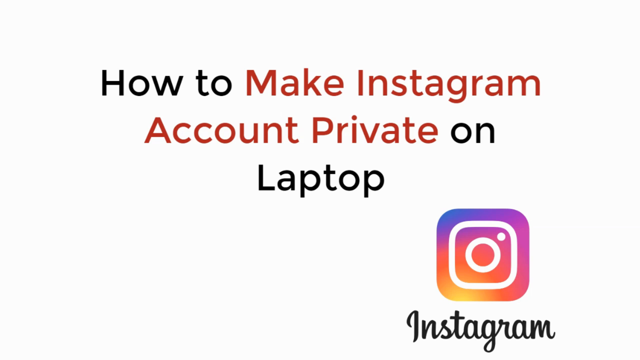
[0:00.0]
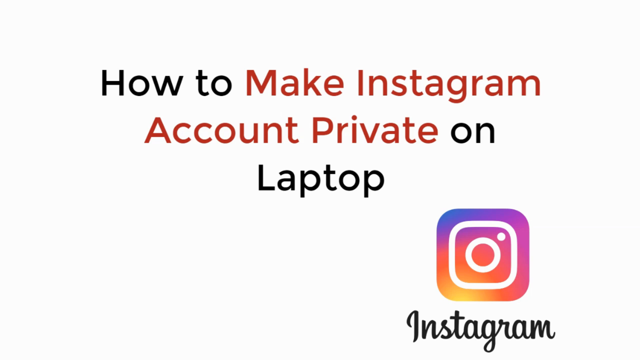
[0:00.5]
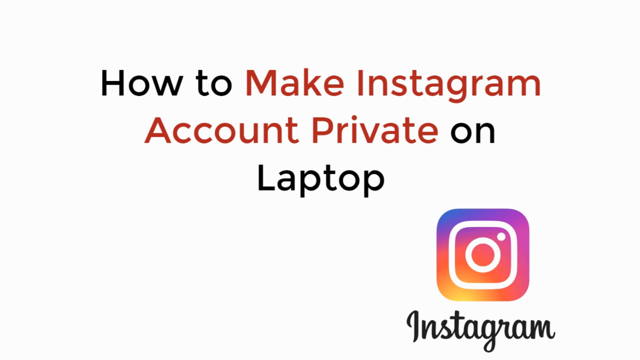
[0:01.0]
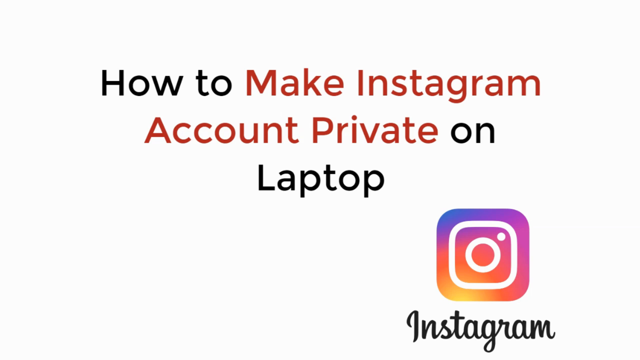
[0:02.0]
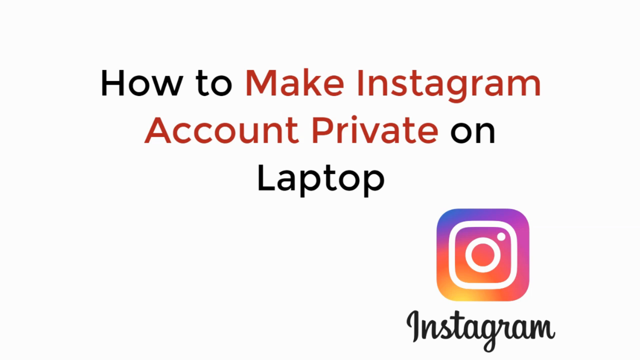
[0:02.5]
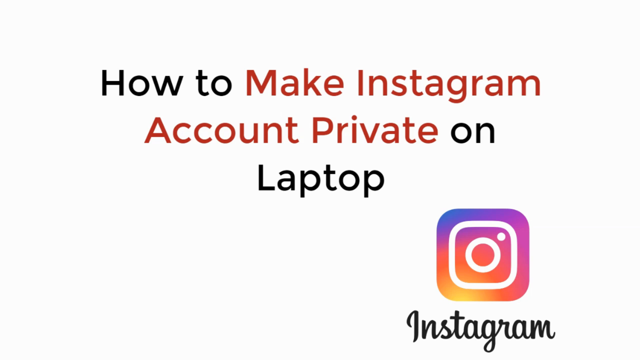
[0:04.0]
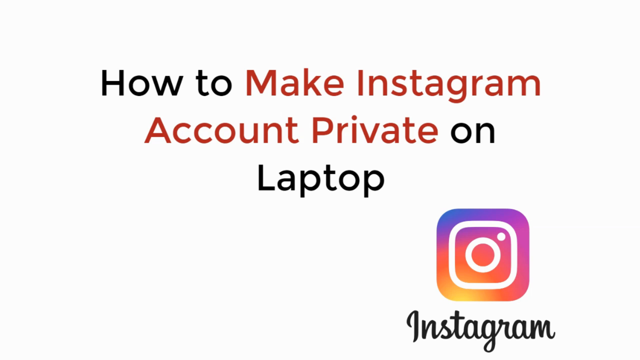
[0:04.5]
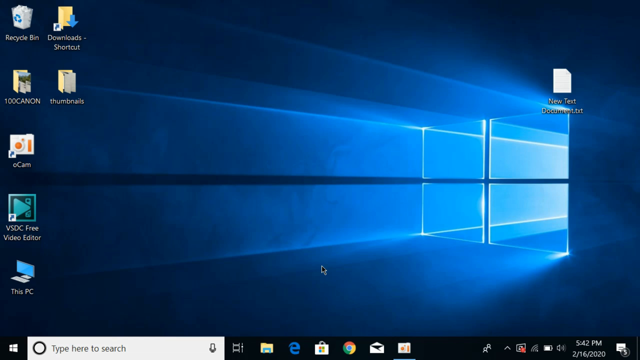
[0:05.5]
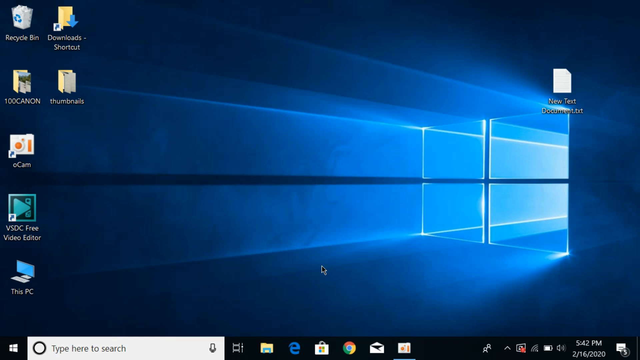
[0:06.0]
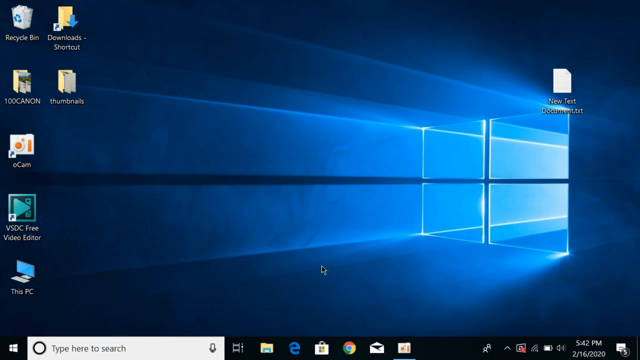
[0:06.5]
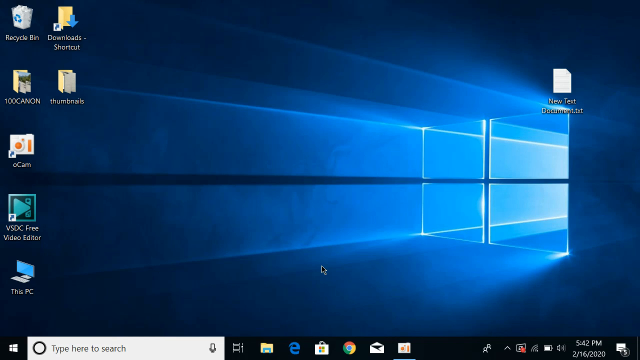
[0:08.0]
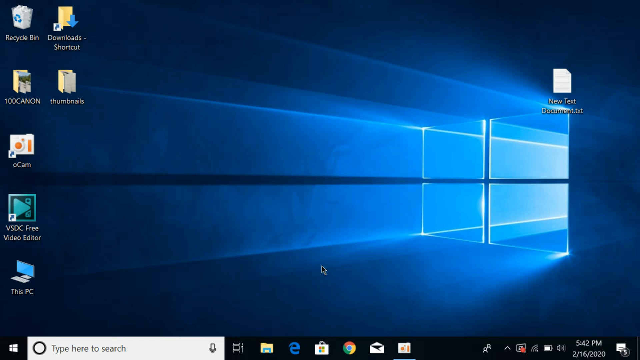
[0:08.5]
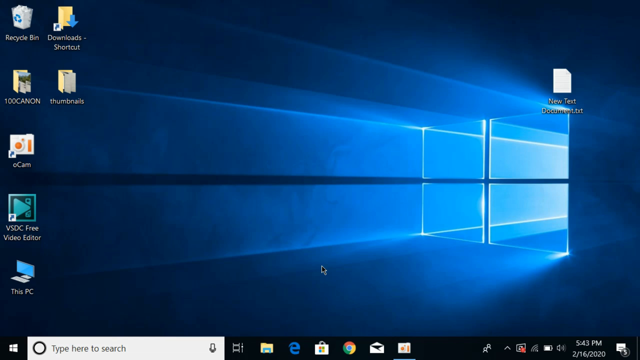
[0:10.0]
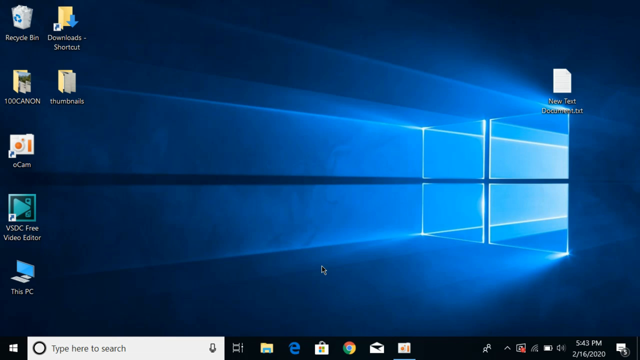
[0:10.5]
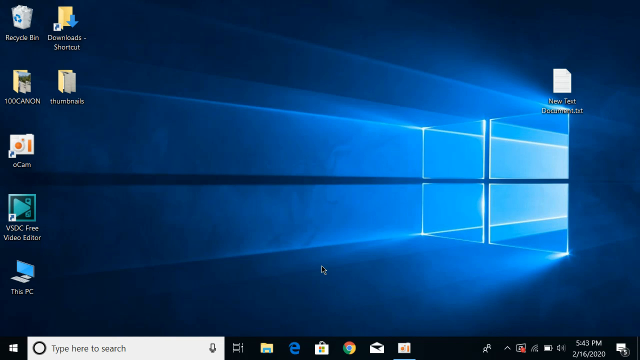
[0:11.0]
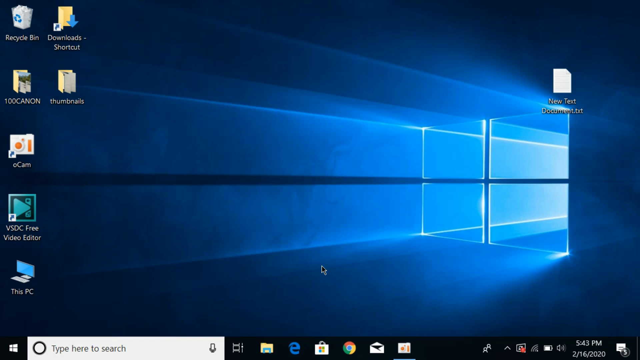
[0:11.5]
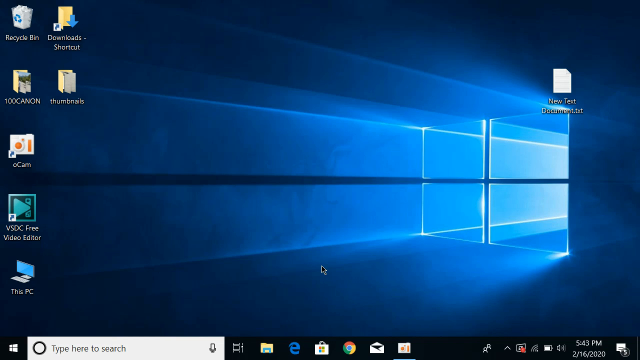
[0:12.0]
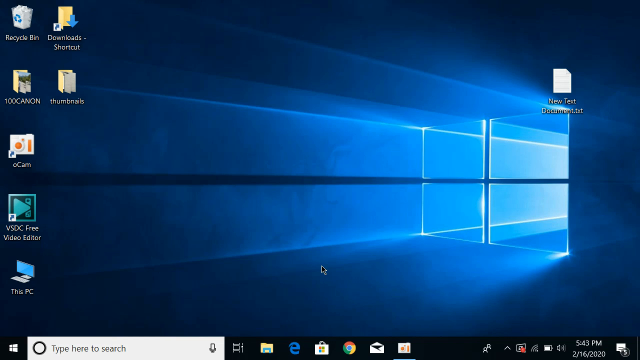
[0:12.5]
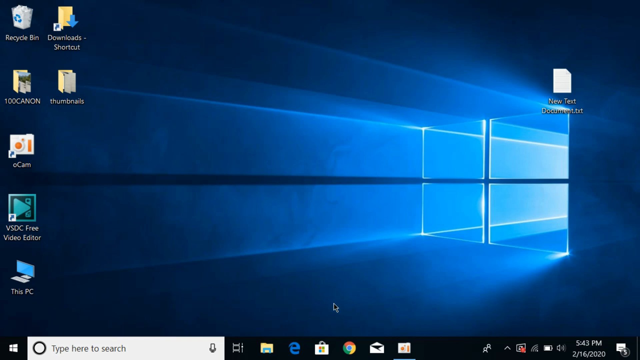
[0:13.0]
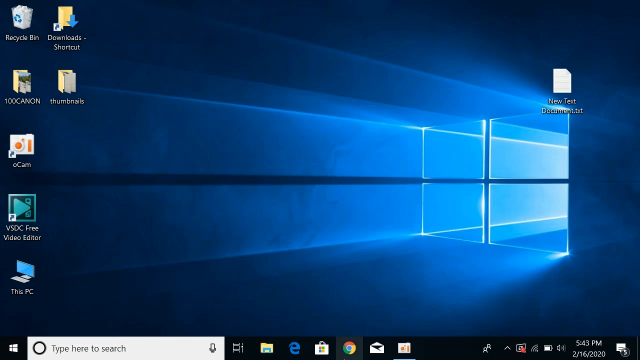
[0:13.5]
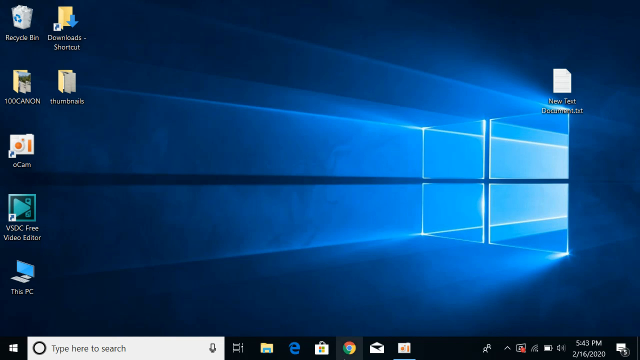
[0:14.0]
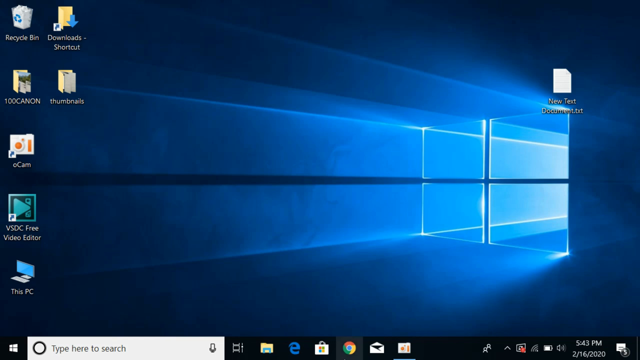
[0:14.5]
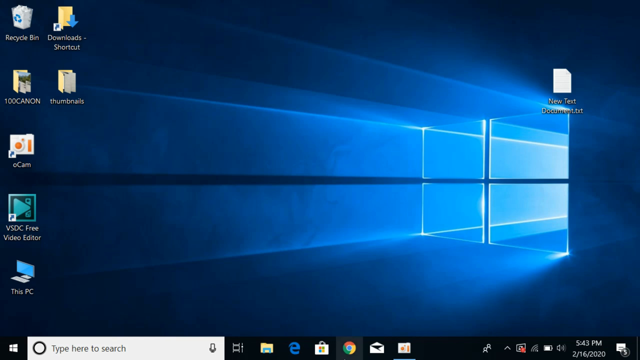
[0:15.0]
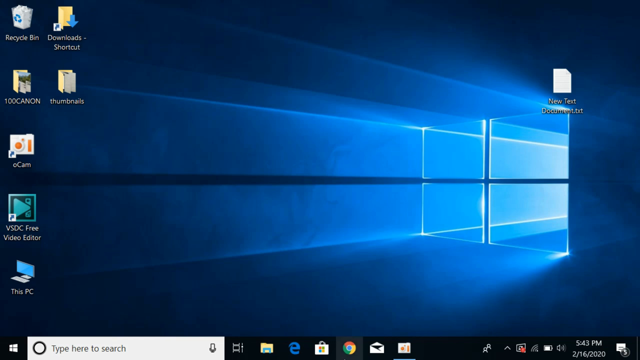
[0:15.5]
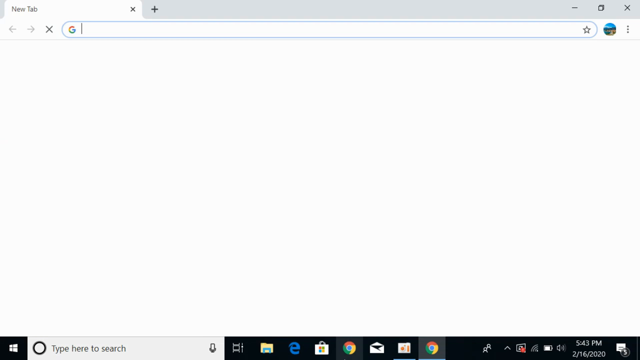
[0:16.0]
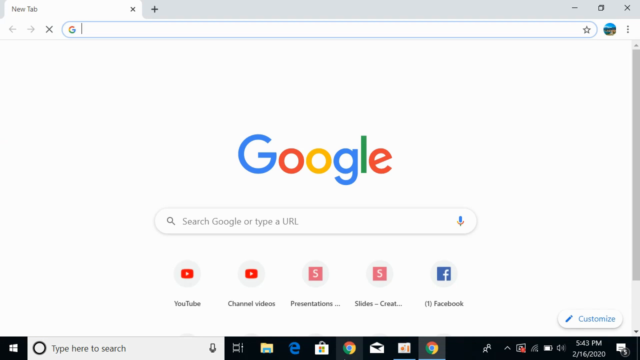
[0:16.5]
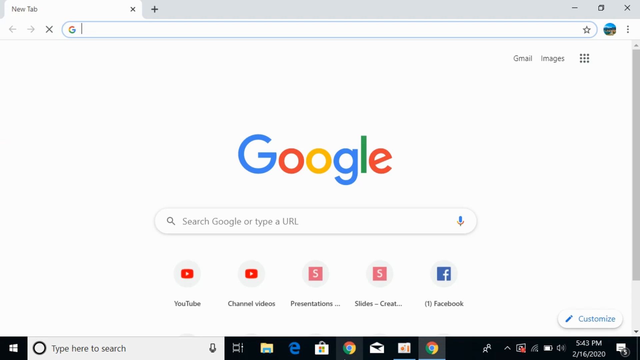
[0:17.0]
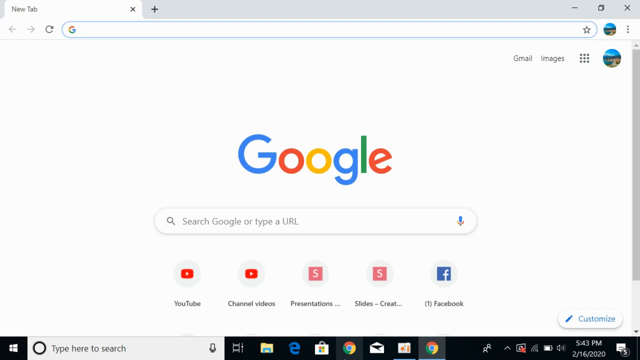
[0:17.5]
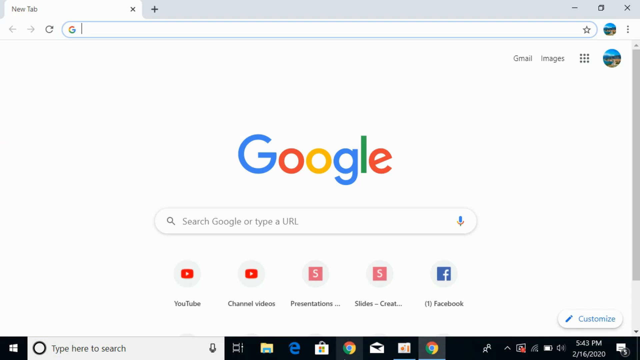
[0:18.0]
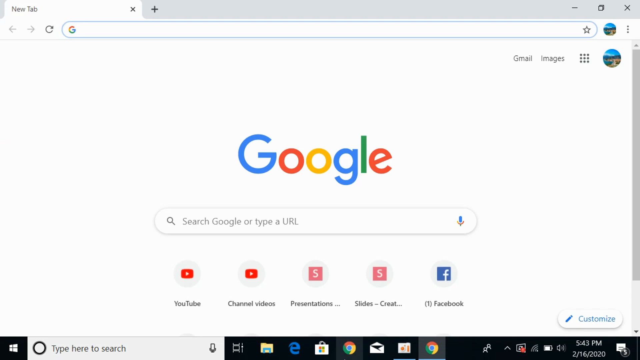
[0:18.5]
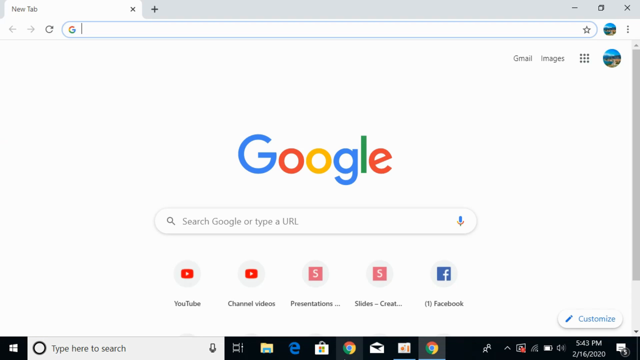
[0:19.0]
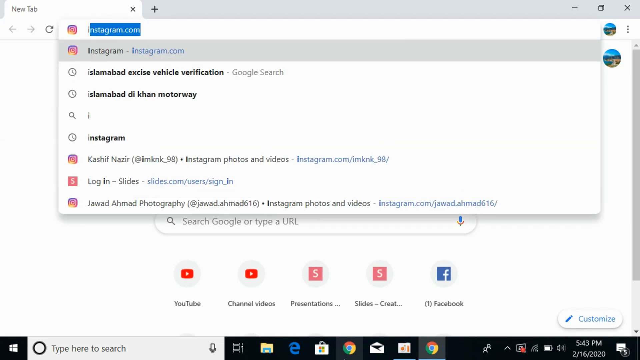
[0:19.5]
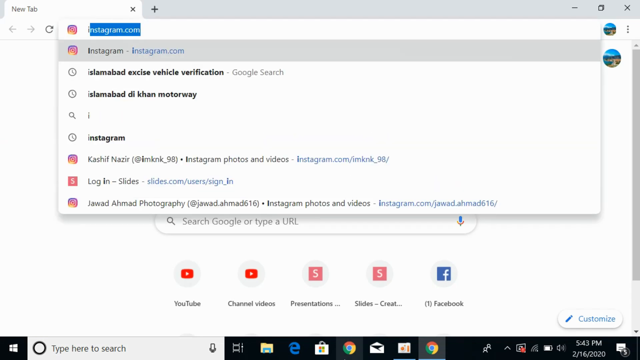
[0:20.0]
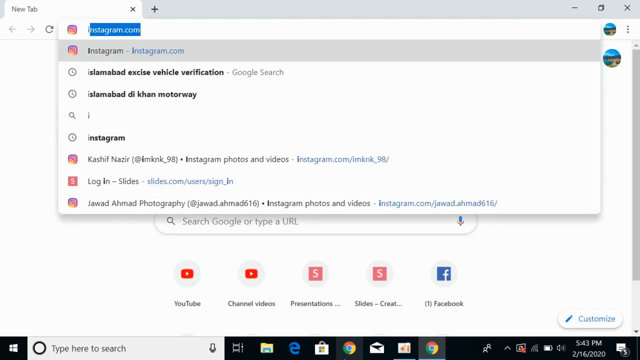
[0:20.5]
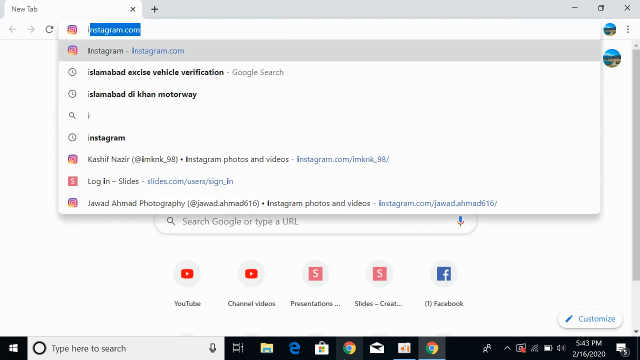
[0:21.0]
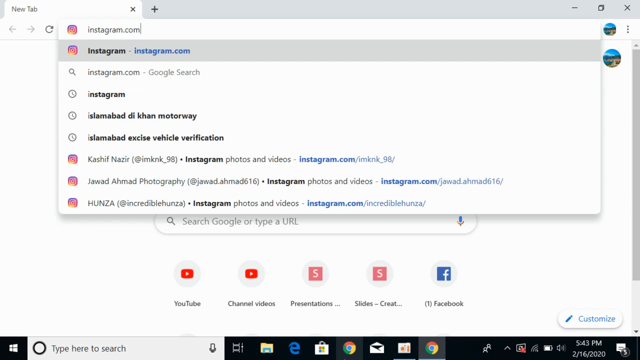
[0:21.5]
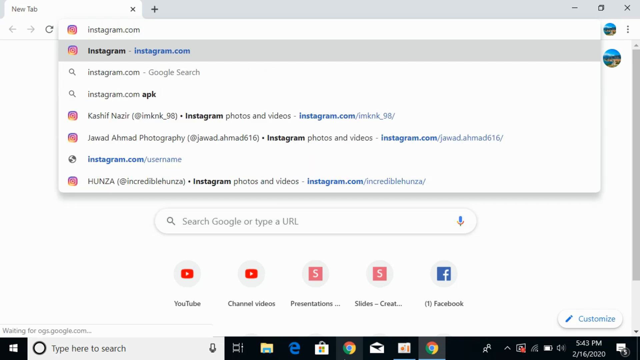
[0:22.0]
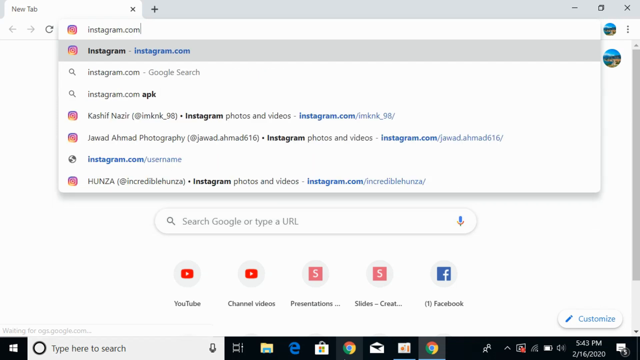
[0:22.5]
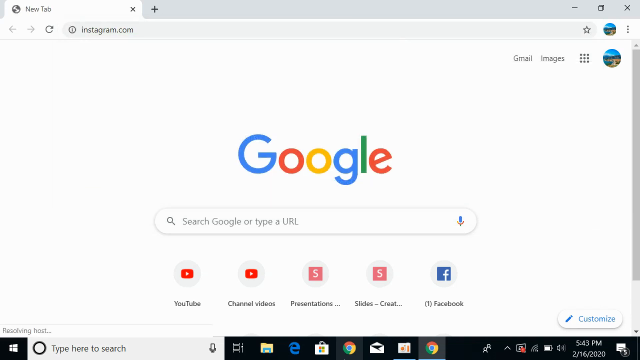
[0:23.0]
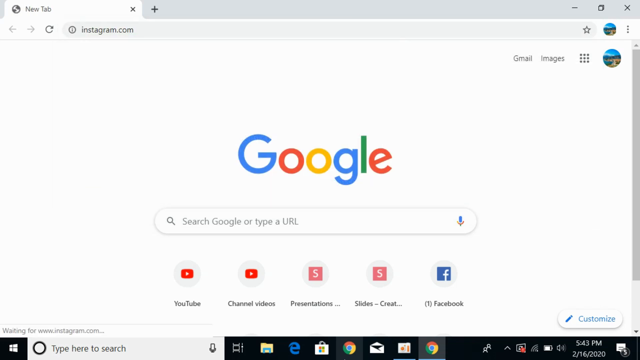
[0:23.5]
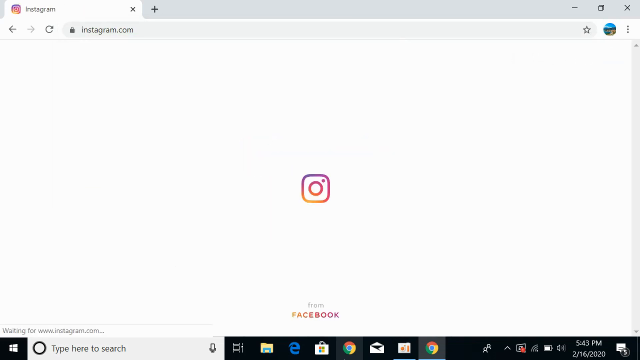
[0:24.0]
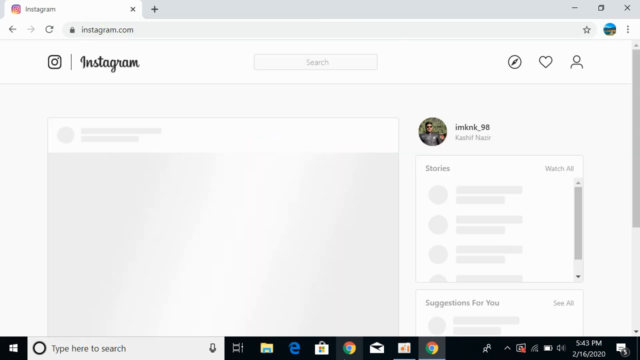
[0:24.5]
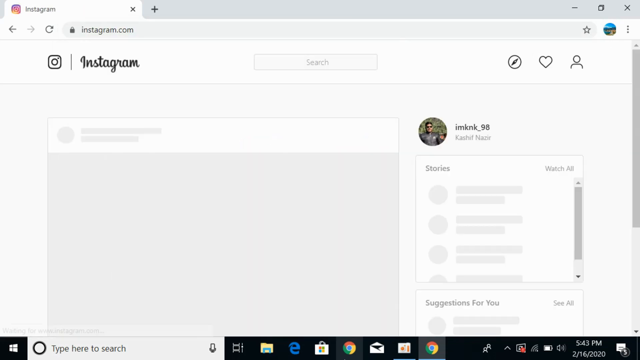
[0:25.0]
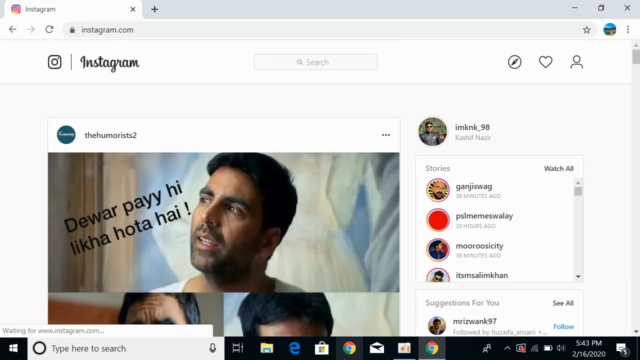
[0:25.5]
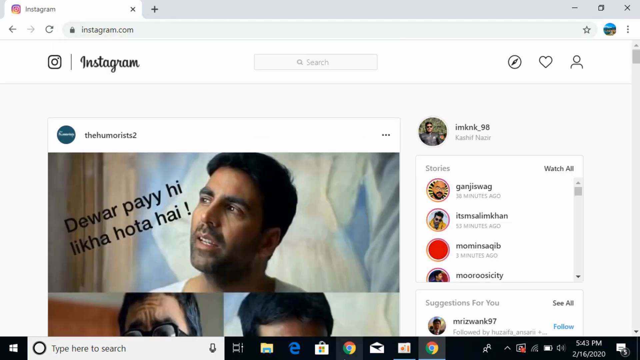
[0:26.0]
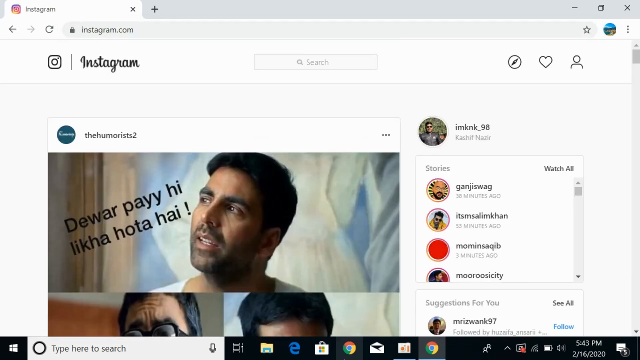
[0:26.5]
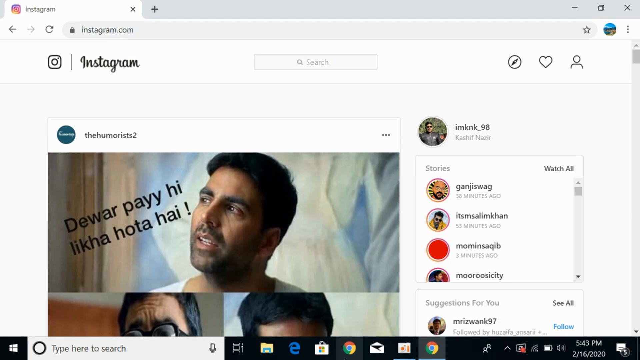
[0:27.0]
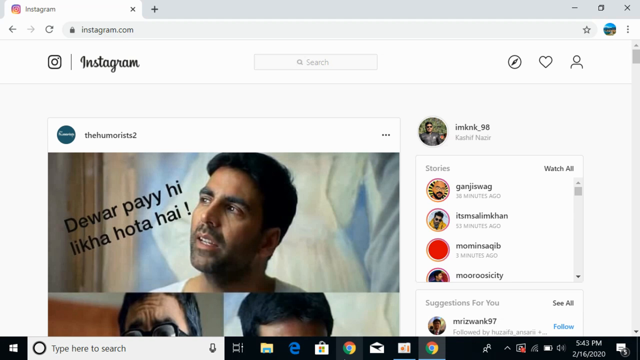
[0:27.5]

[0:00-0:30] A computer screen is shown. The first thing that appears is the text "how to make Instagram account private on laptop", with the Instagram icon in the bottom corner and "Instagram" also written at the bottom. The view then moves to the desktop of a computer running the Windows operating system, with the recycle bin and some icons on the screen. The user goes to the Google website and types "Instagram" into the Google search bar. After that, someone's account appears, showing their followers and their story. The account displays three pictures of a man, and the profile picture appears to show a man in his late 40s.